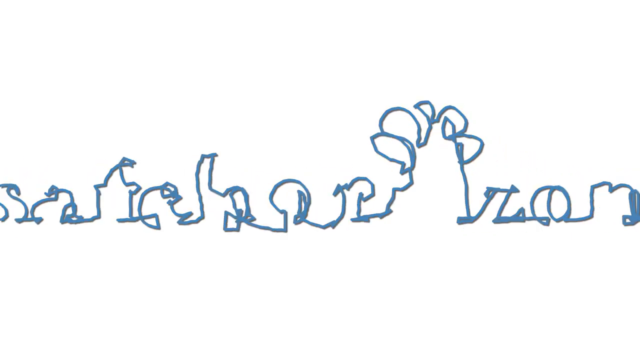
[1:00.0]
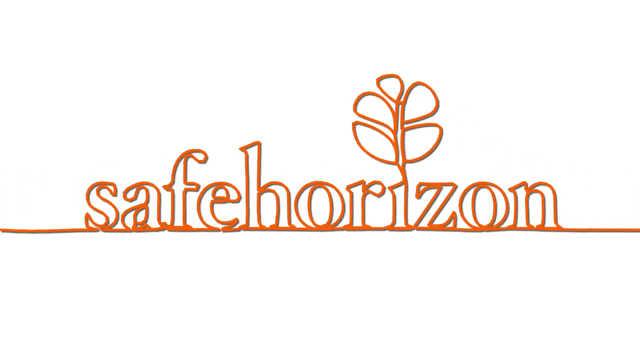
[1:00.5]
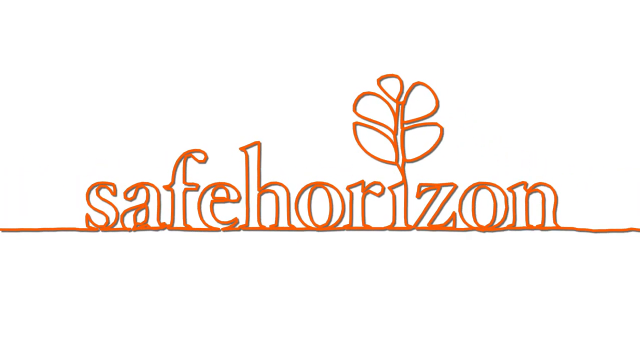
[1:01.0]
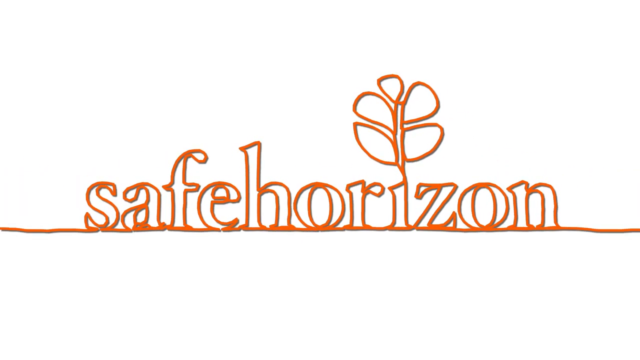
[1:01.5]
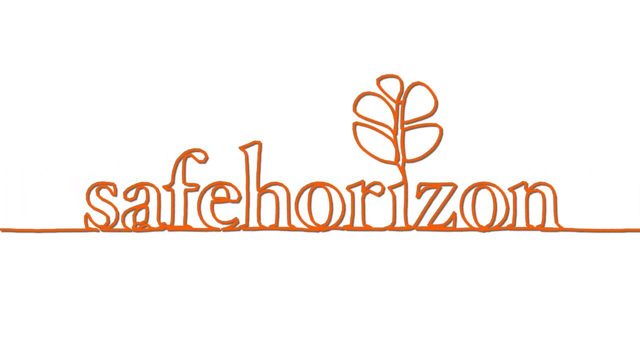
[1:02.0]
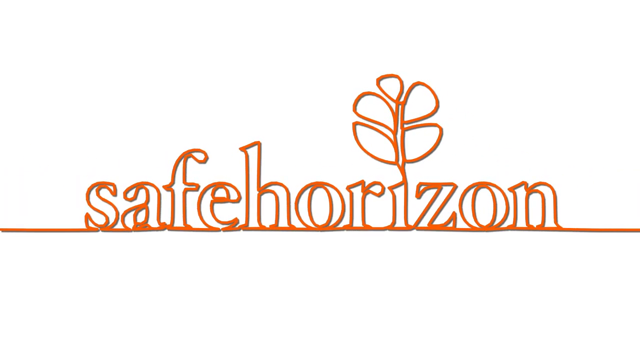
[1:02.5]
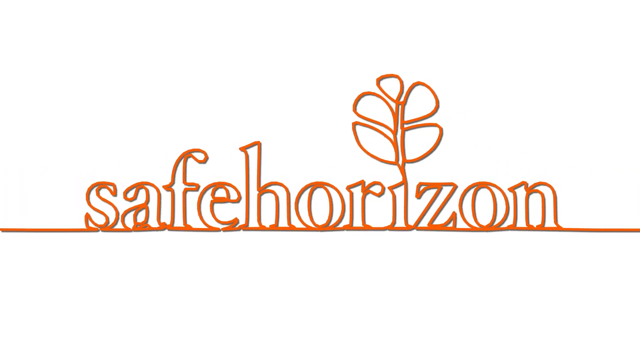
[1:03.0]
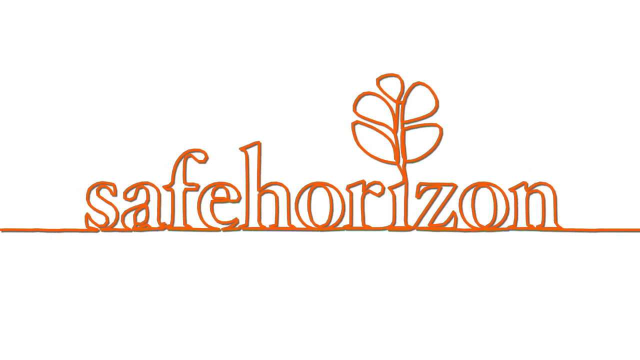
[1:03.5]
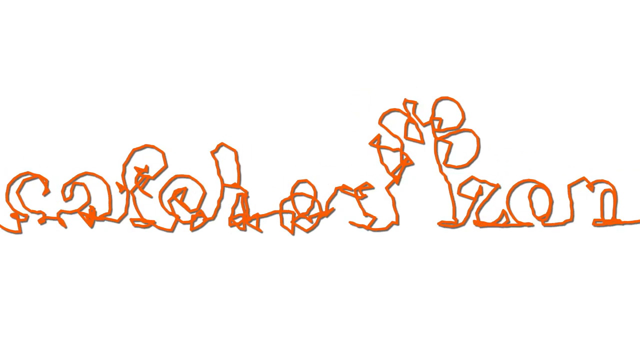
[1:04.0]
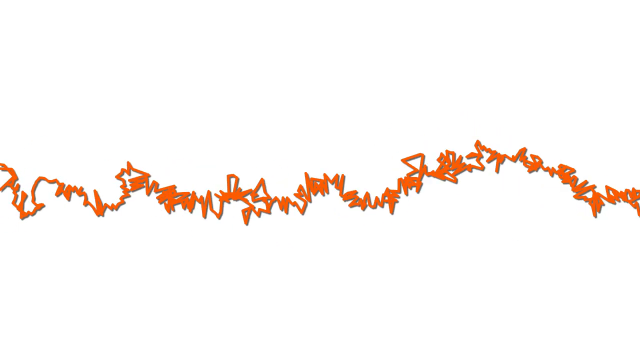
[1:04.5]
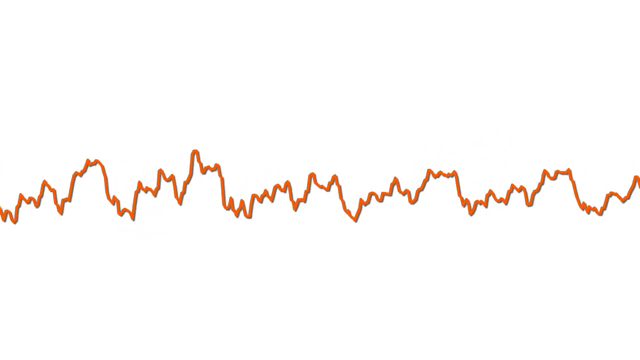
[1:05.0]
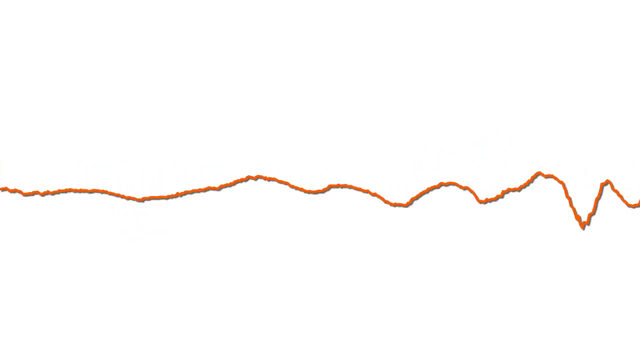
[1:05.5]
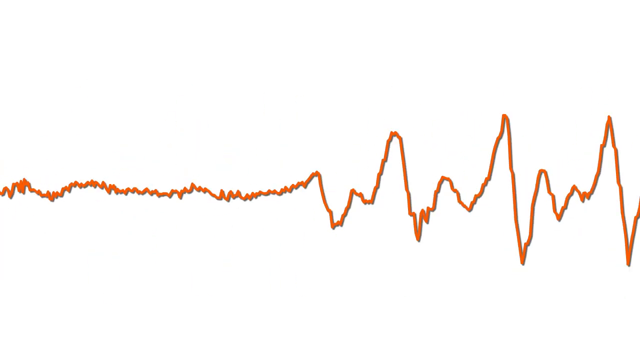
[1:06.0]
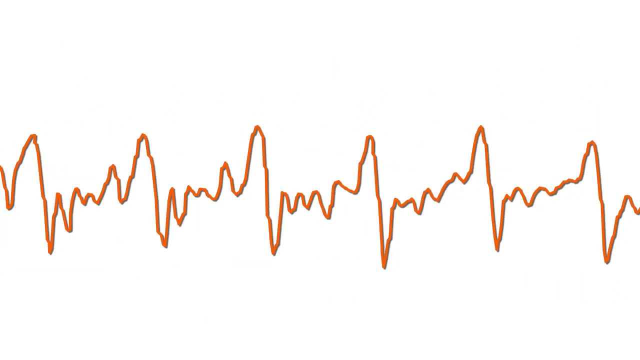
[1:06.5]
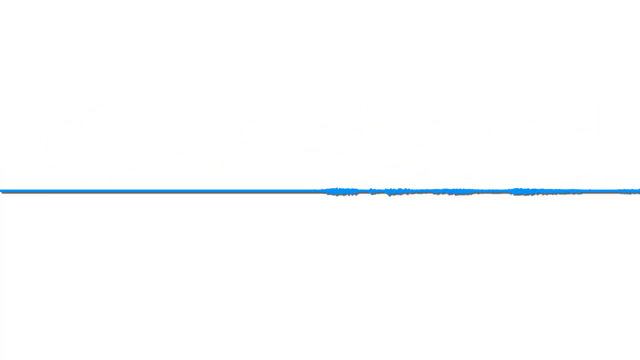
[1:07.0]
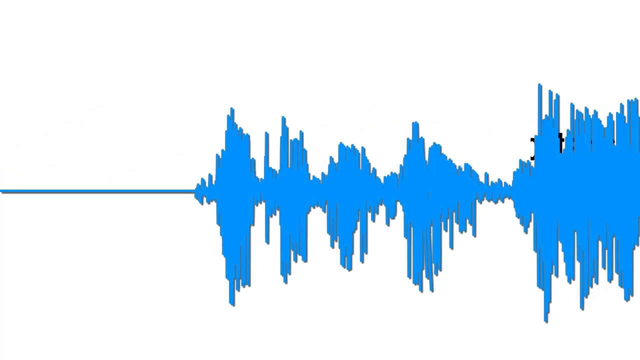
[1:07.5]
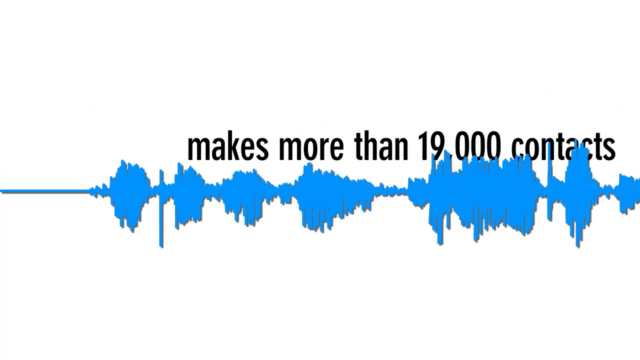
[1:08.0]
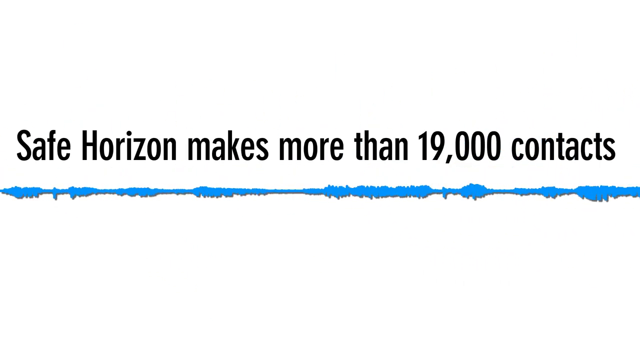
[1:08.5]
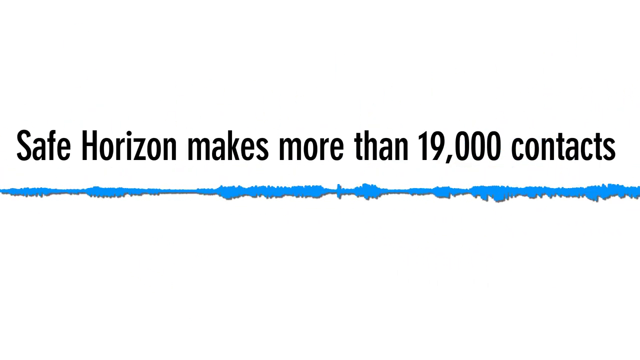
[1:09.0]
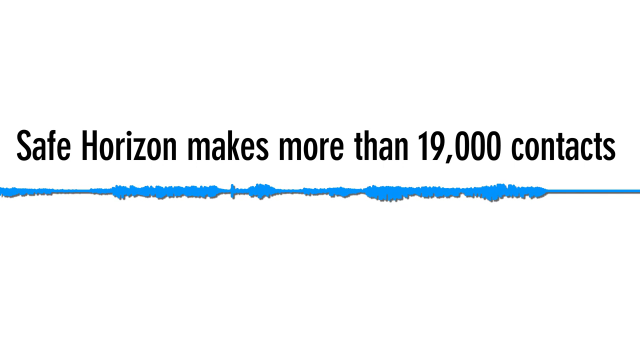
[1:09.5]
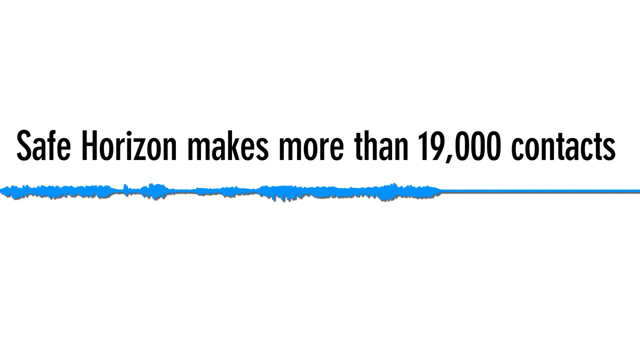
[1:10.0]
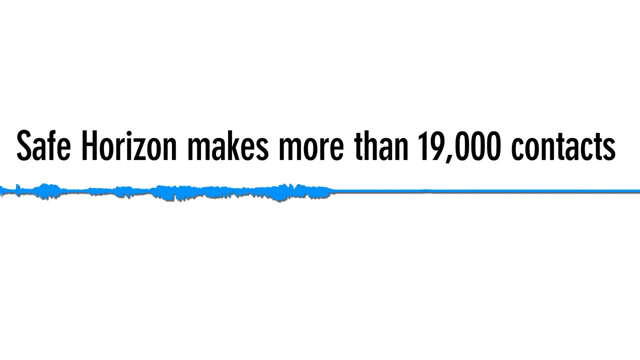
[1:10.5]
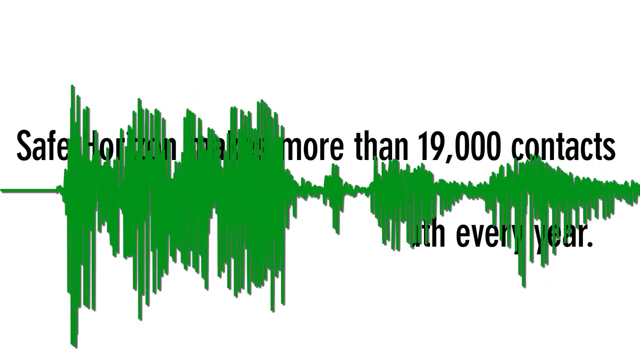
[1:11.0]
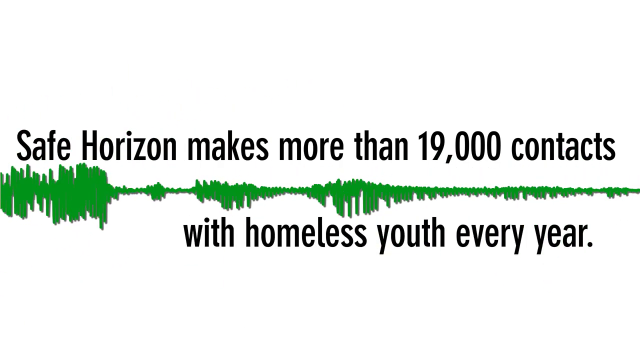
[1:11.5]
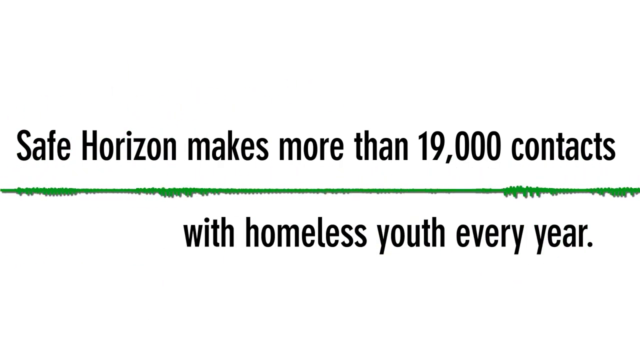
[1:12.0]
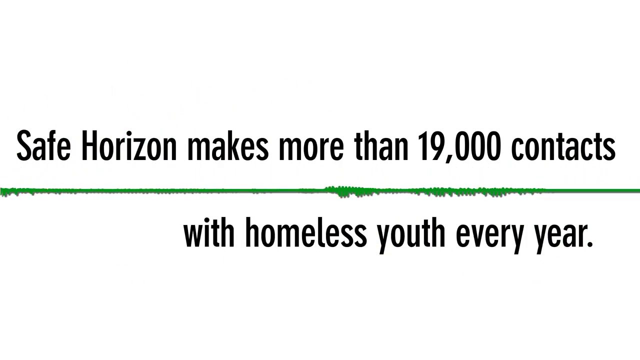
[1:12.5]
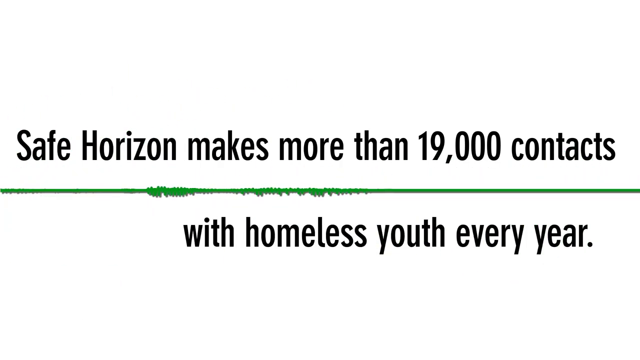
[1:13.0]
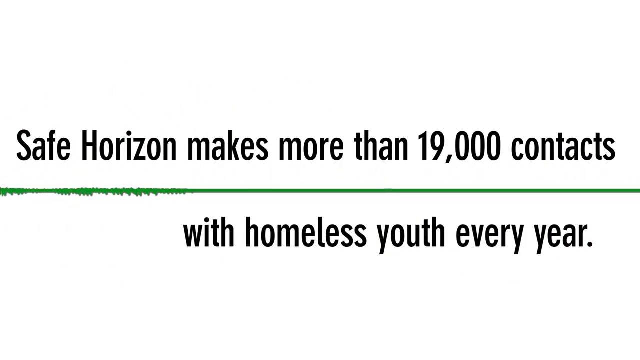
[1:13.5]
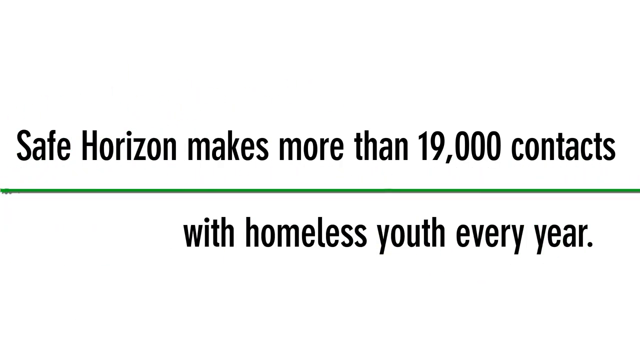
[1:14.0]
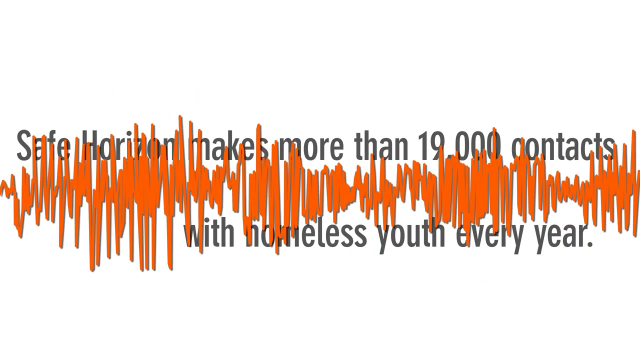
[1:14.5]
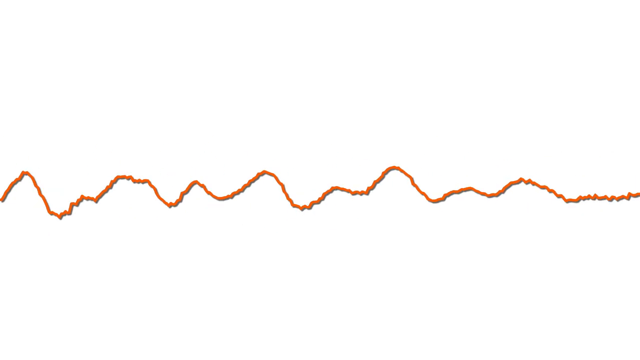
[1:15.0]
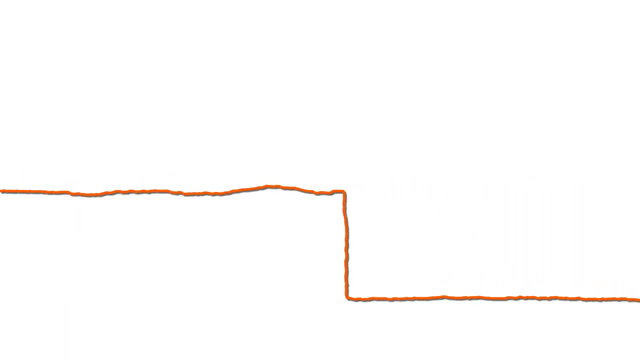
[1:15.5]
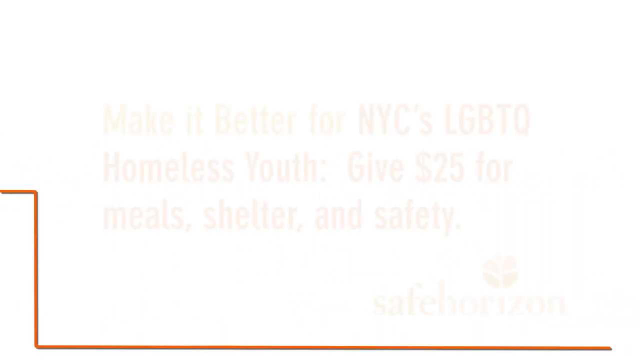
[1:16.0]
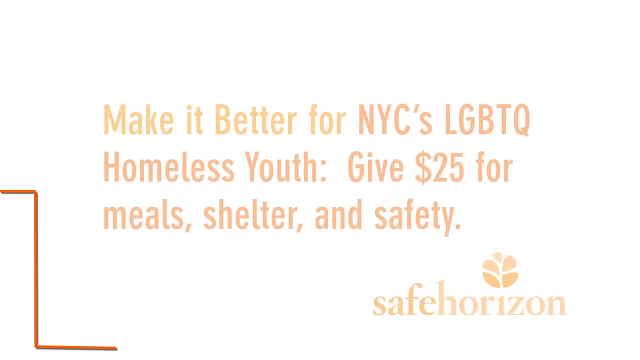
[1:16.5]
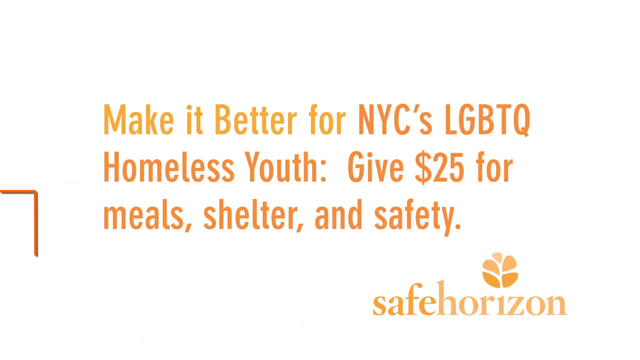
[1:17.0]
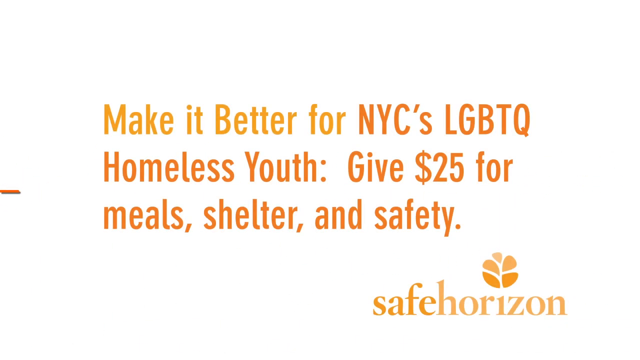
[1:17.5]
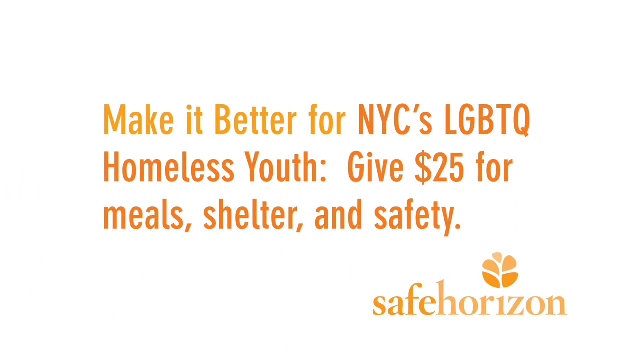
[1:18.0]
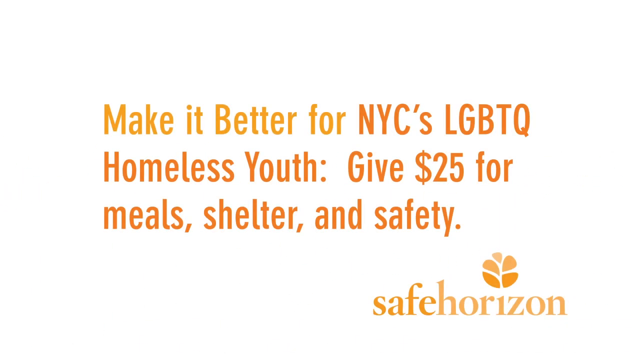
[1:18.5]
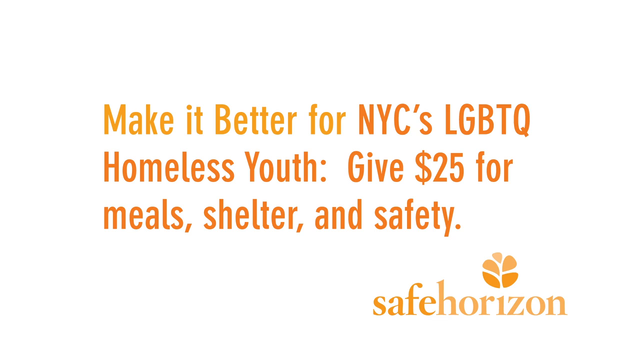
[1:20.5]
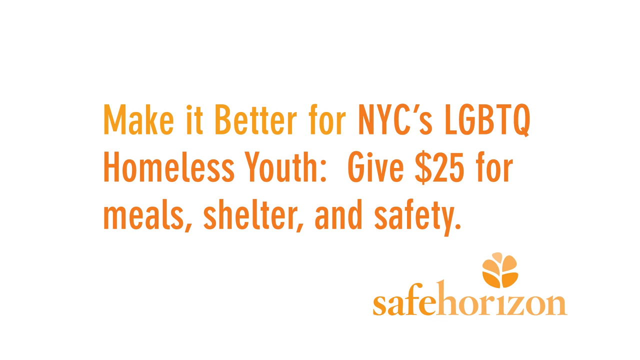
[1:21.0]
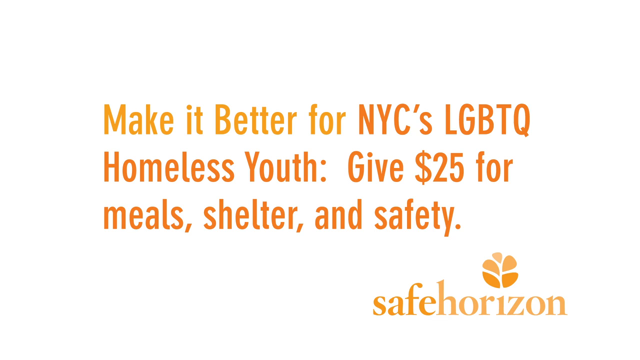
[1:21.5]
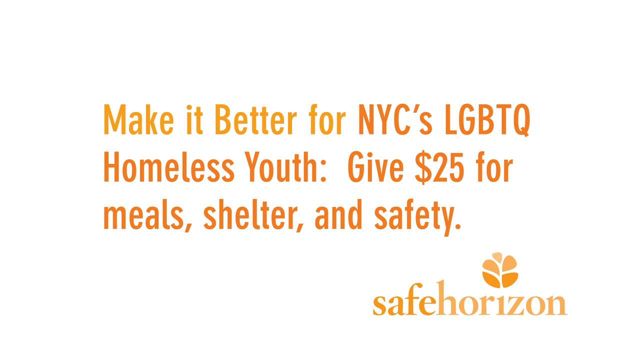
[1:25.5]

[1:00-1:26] The blue line forms a series of letters, turning orange again as it does so, spelling "safe horizon". The I in "horizon" has something like a tree stump or plant twig coming out of it, with leaves growing off it, five in total: two on the sides and one smaller one on top pointing toward the sky. The letters shake a bit, form back into the horizontal line, and turn into oscillating waves. The line turns blue, a wave of oscillations passes, and text appears above the line reading "safe horizon makes more than 1,900 contacts". The blue line turns into a green oscillating line and the text continues "with homeless youth every year". The green line then turns orange. The text disappears back into the orange oscillating lines, which become a very short horizontal line coming in from the left middle and dropping straight down toward the bottom. More text appears in the center, again with a little light orange at the beginning and most of the words in dark orange: "make it better for NYC's LGBTQ homeless youth. Give $25 for meals, shelter, and safety." In the bottom right, "safe horizon" appears again; this time the logo does not have the little twig connecting the five petals. The words are all in a dark orange, while the petals have slightly different shades, the bottom ones darker than the top ones.